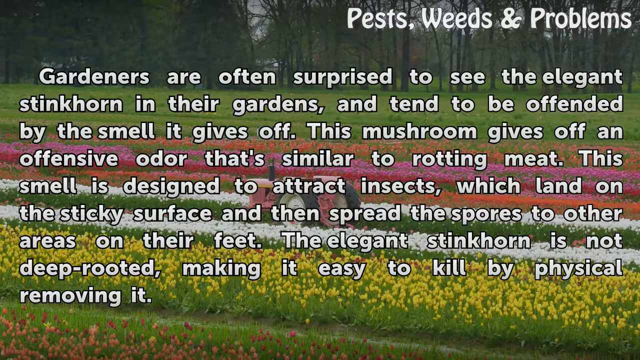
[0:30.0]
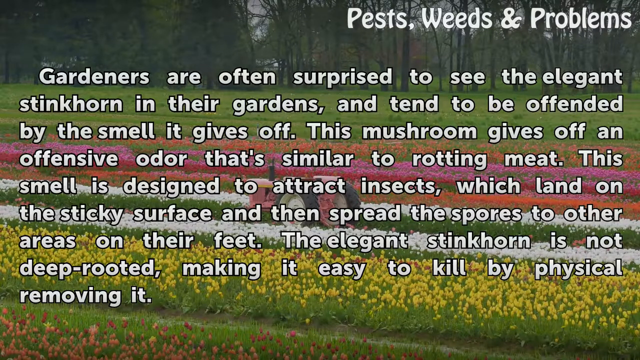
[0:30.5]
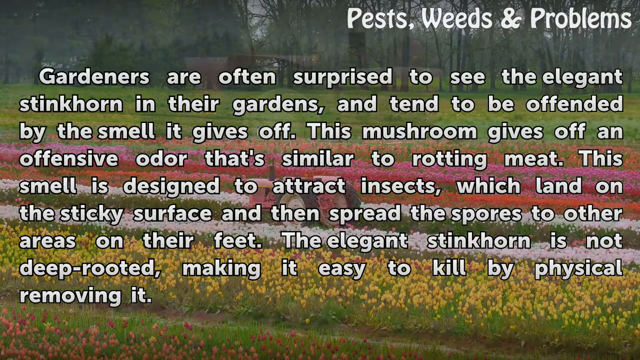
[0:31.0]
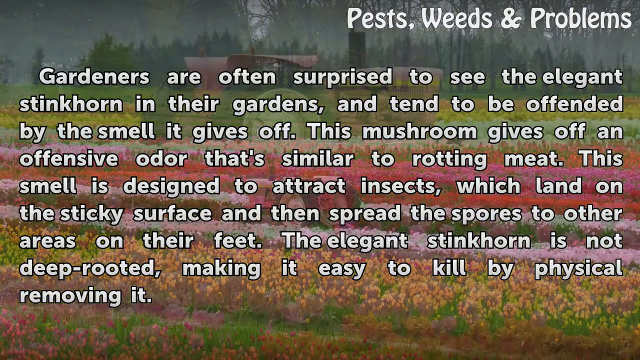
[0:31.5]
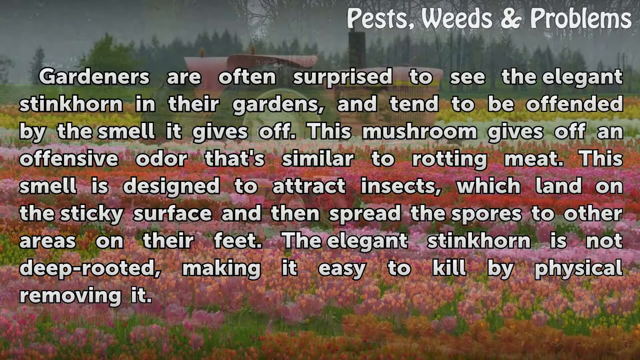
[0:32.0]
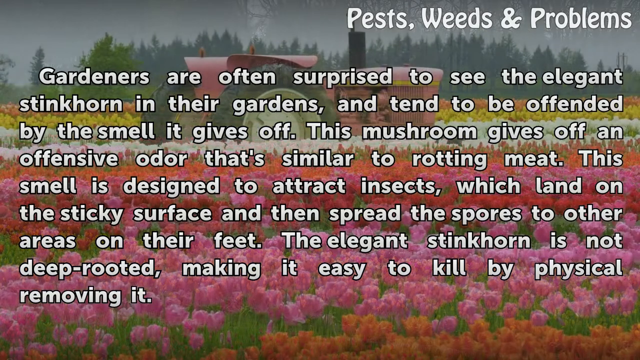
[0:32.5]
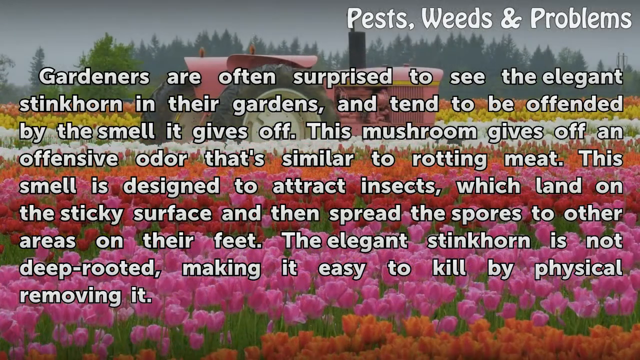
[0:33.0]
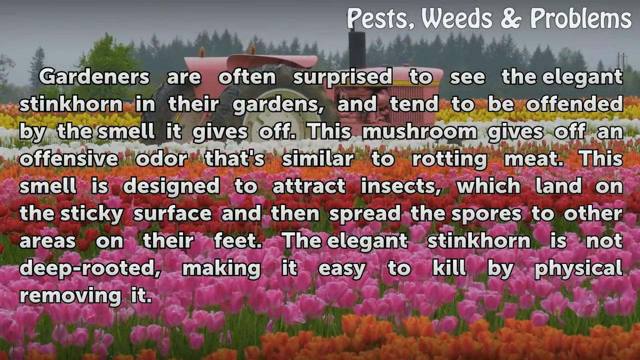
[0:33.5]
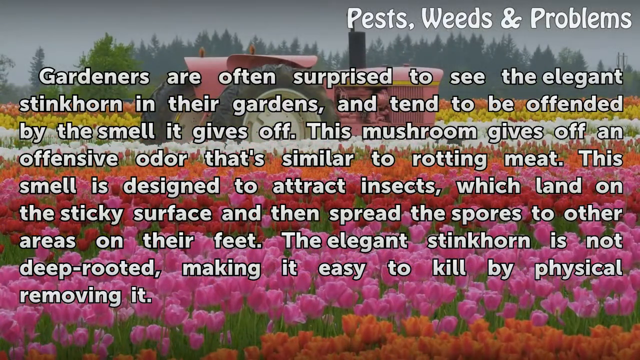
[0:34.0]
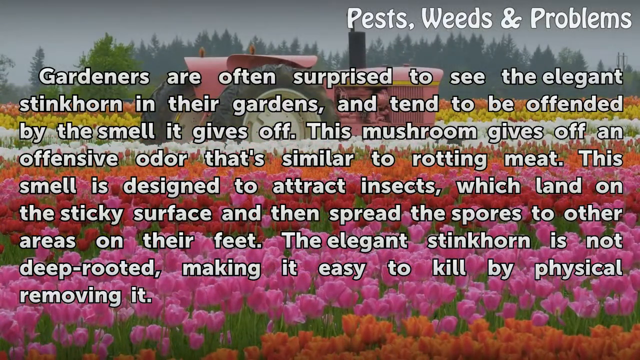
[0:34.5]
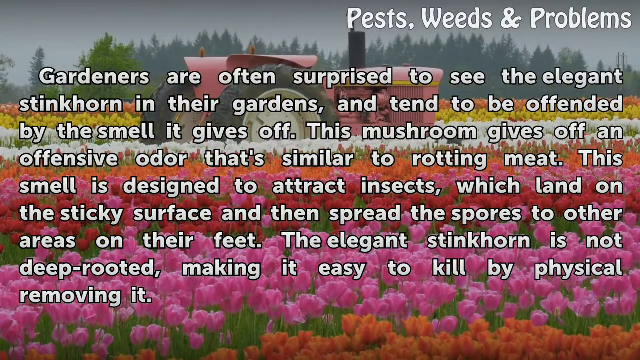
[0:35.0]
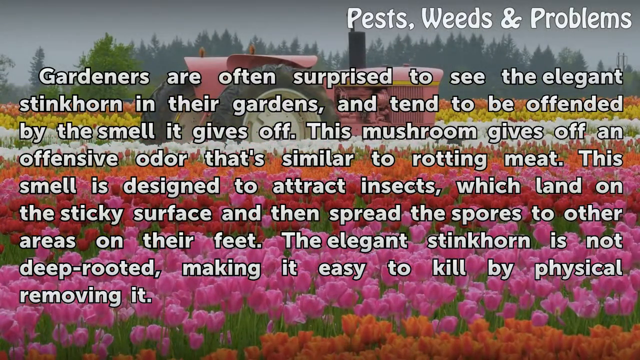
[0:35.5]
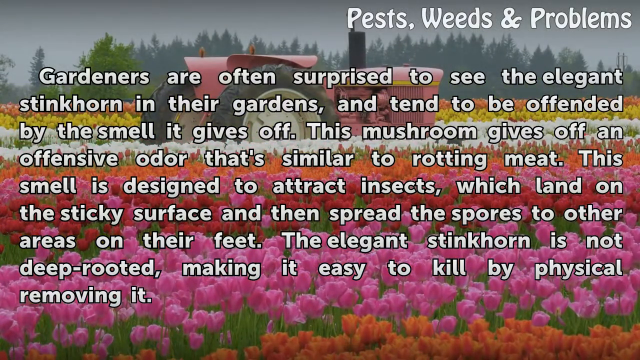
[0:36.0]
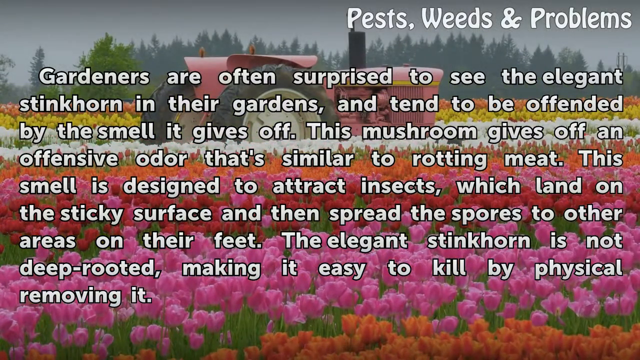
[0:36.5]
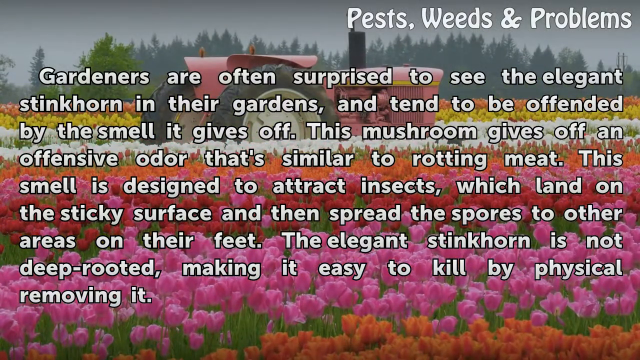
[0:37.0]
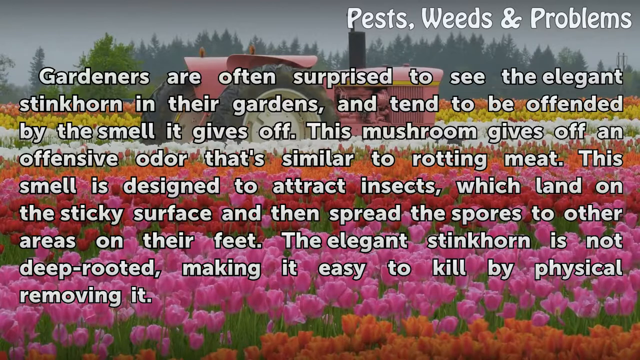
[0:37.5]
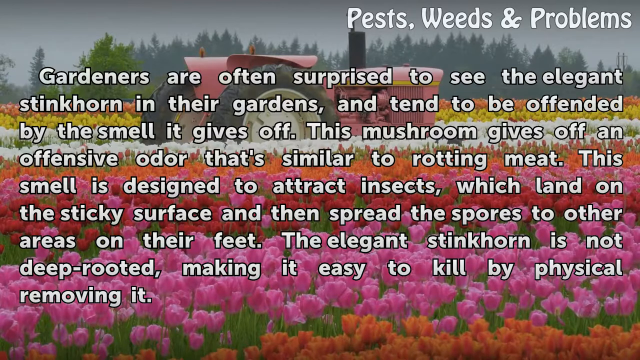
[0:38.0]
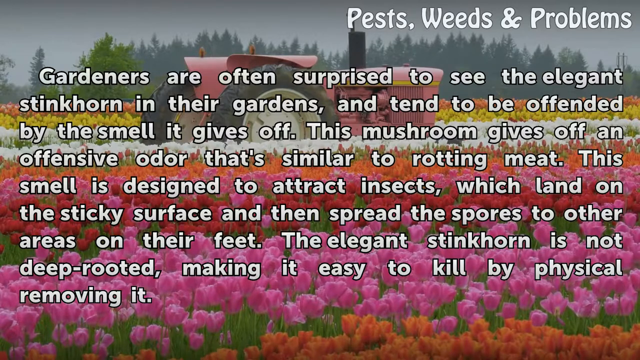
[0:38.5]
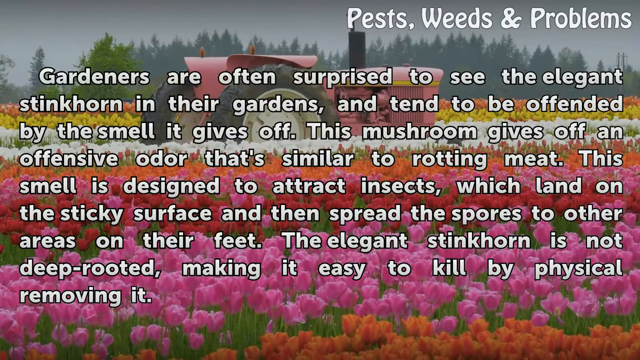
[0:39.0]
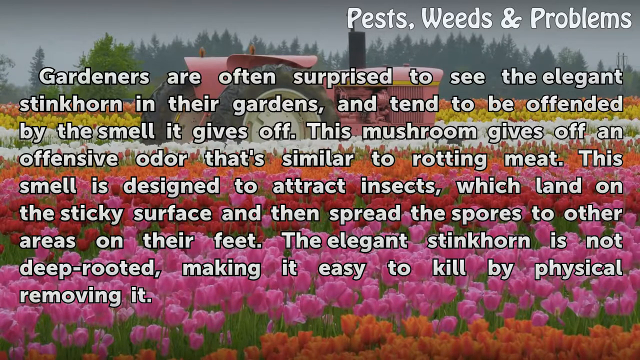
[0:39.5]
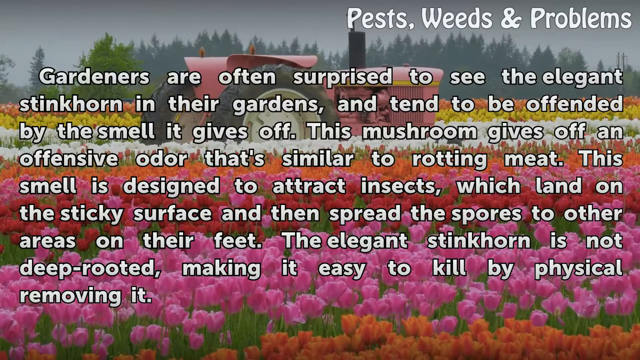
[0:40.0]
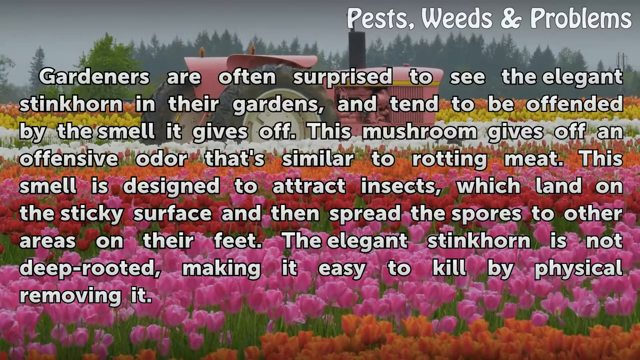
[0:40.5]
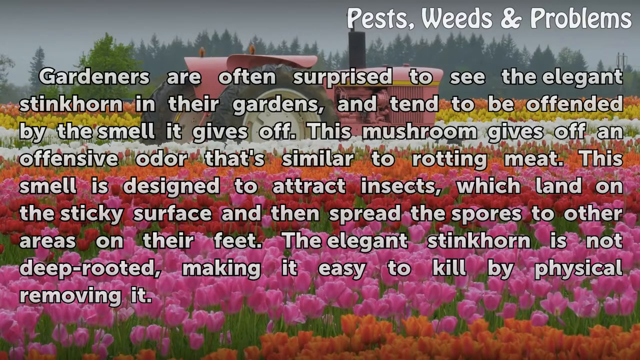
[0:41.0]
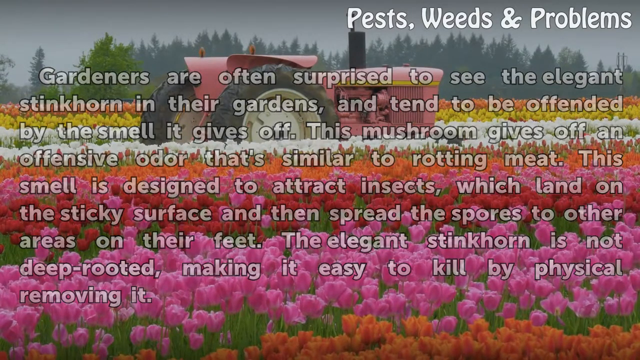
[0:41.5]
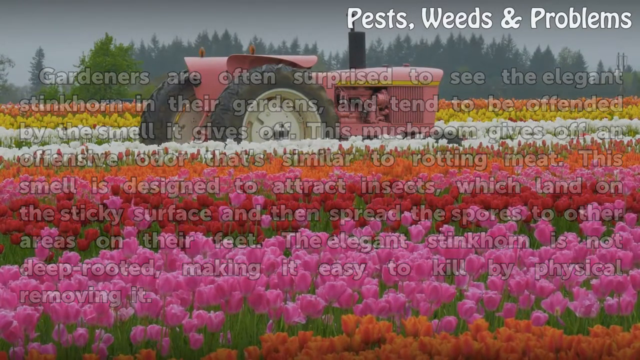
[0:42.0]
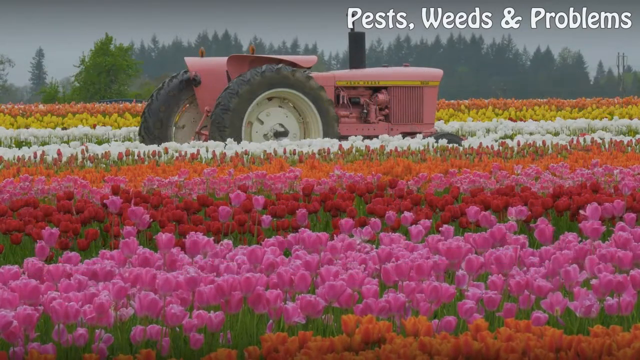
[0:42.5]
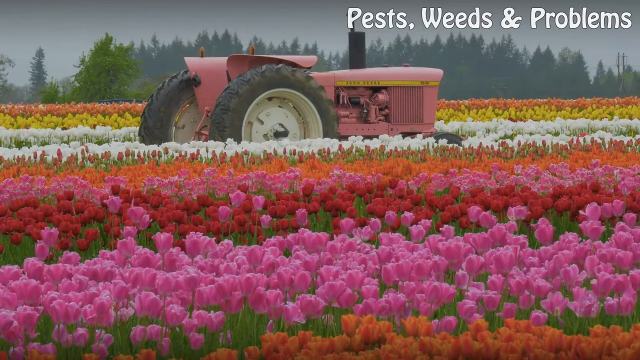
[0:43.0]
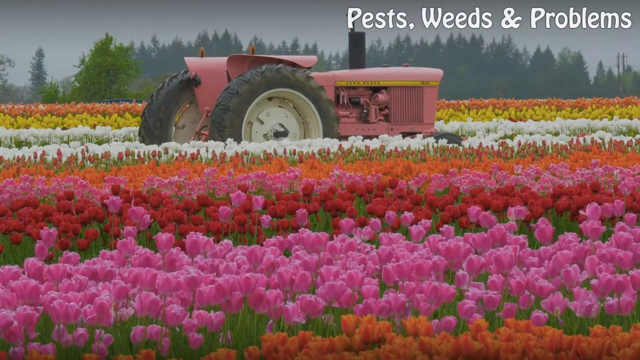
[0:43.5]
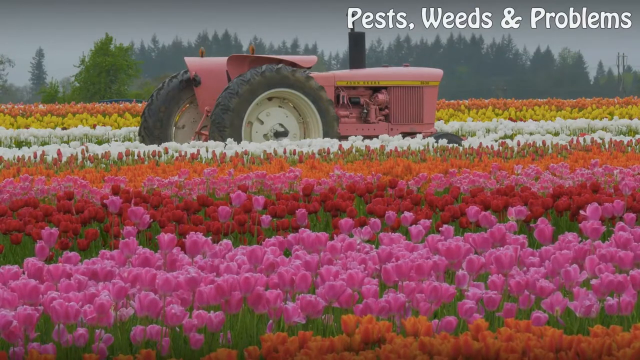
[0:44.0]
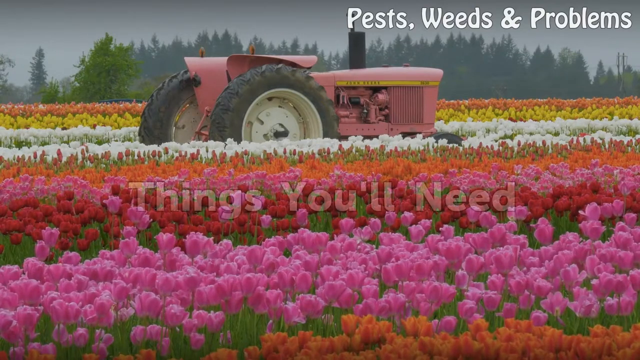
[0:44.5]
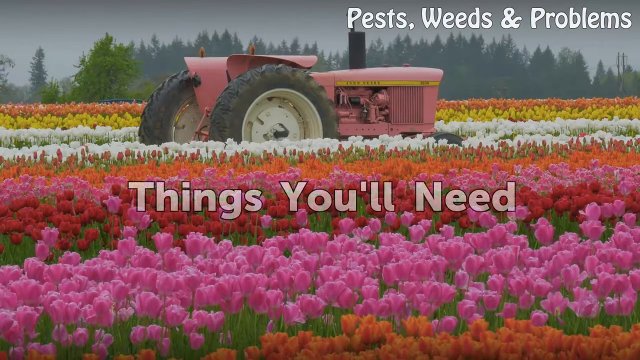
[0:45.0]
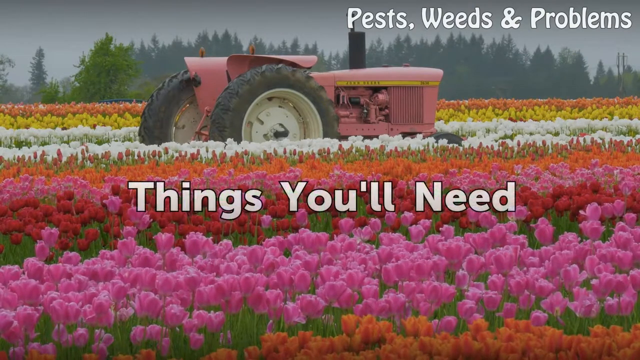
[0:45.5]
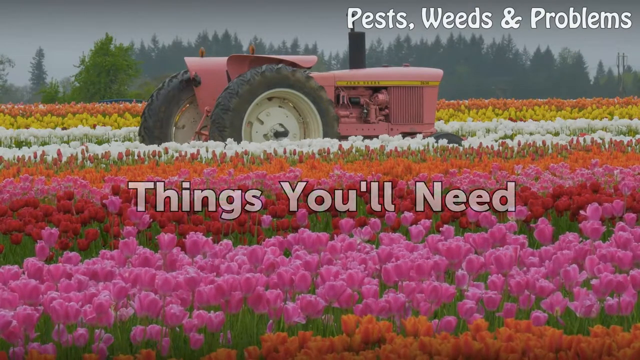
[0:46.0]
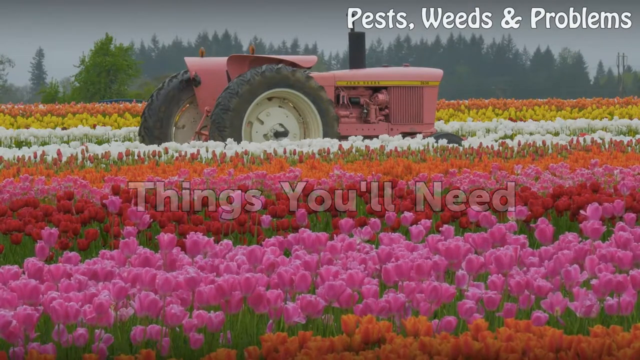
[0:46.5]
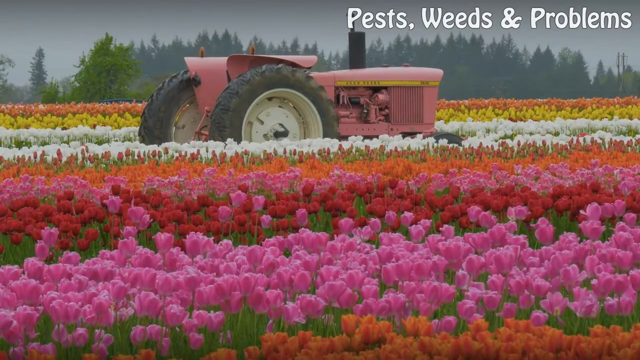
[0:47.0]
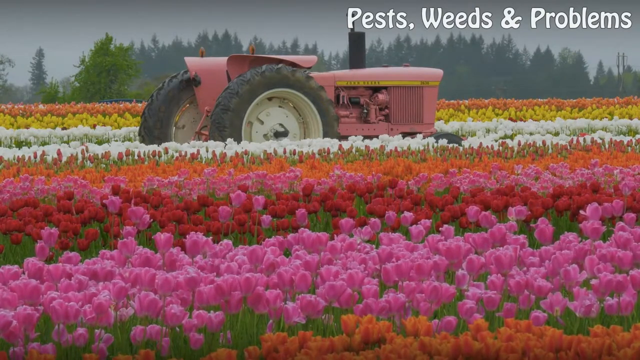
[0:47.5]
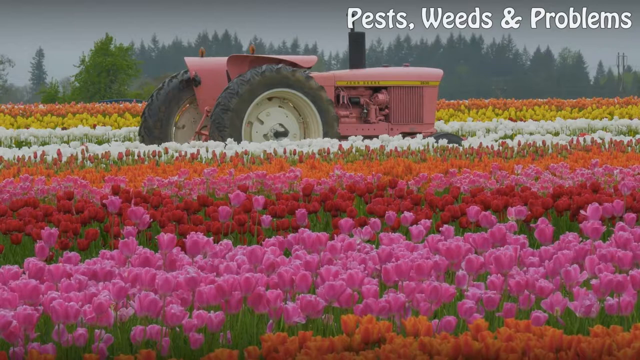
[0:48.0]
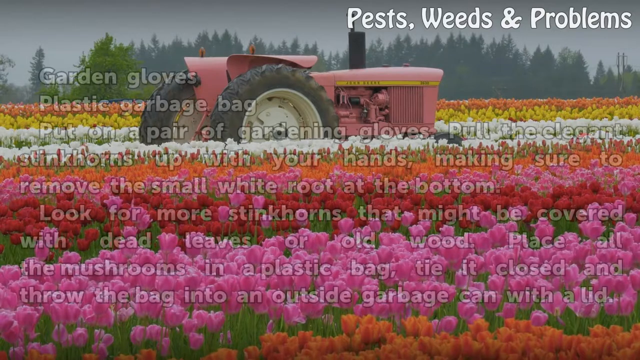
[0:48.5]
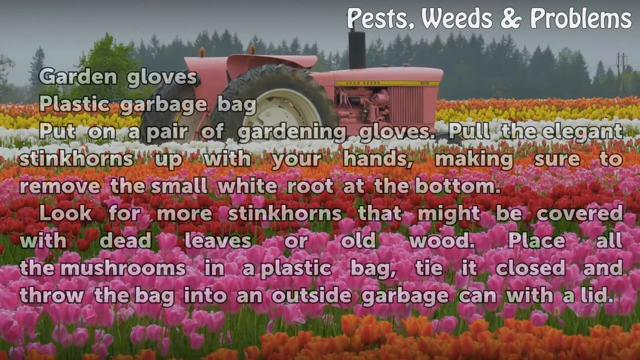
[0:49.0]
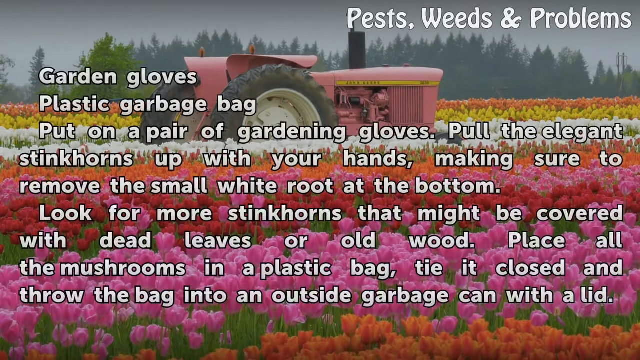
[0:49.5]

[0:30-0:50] The same white lettering about the stink horns remains over the garden, with the tractor behind it and a forest behind that, and "pests weeds and problems" is still in the corner. The picture then switches to a different view of flowers and a tractor; the flowers in the forefront are purple, red-orange and white, and the tractor in the background is bigger and older. The words fade away and are replaced by "things you'll need" in white block lettering over pink and red flowers. The tractor in the background is pink, with giant wheels and a smokestack in the middle of it.